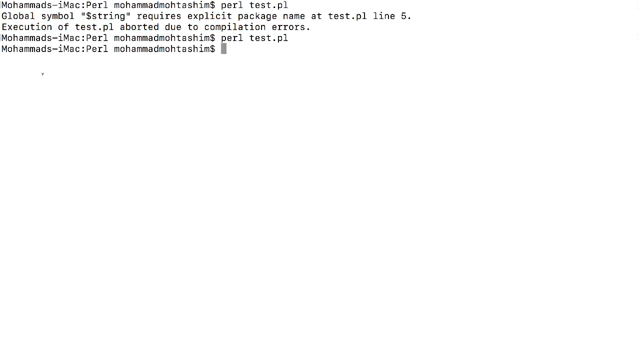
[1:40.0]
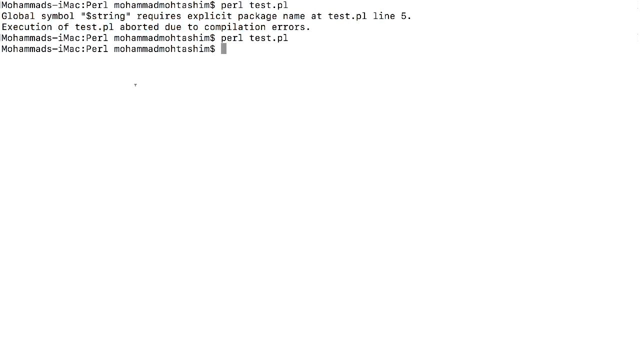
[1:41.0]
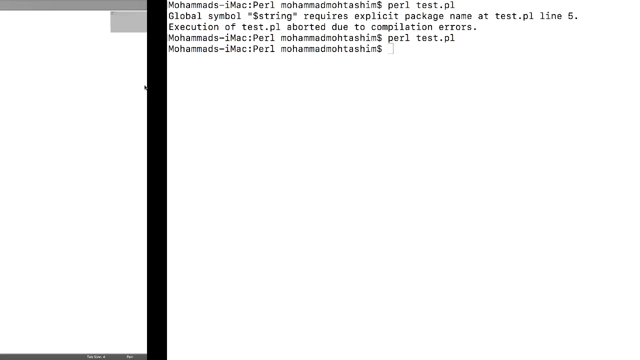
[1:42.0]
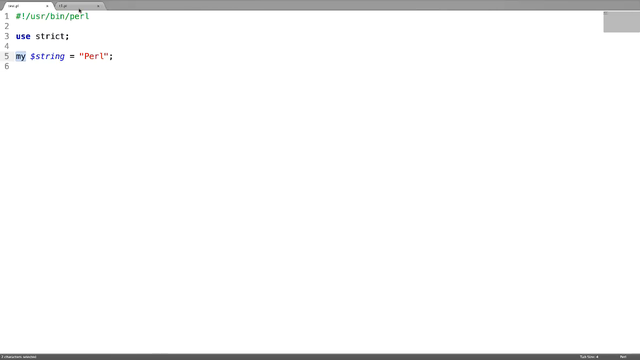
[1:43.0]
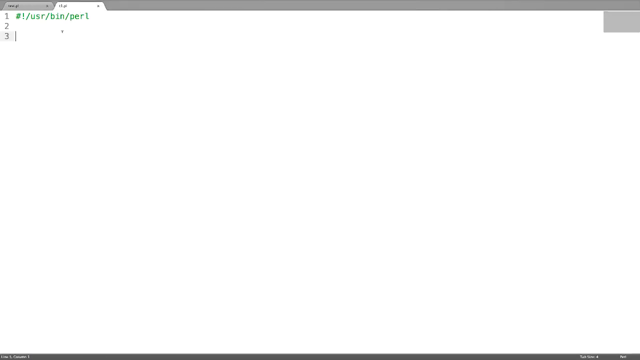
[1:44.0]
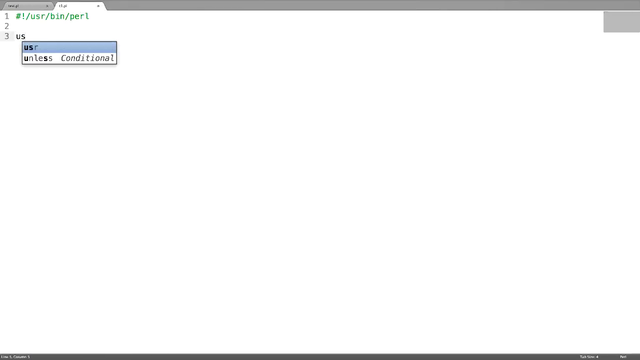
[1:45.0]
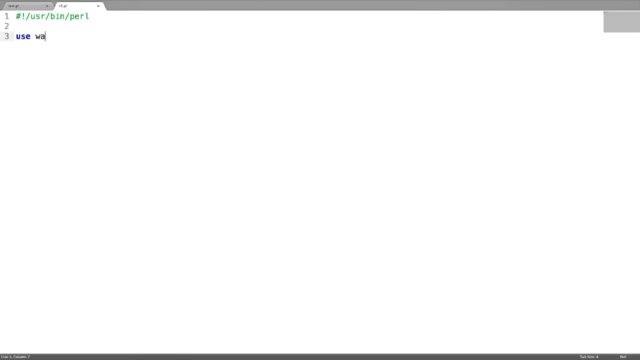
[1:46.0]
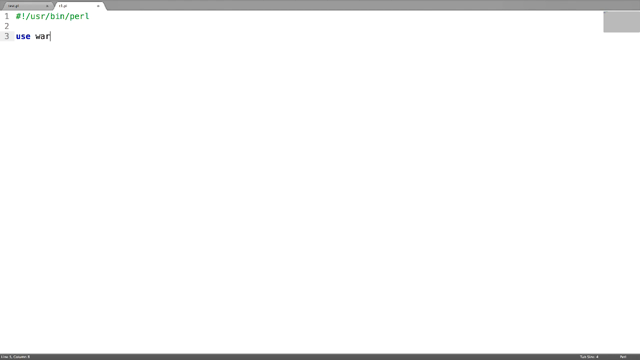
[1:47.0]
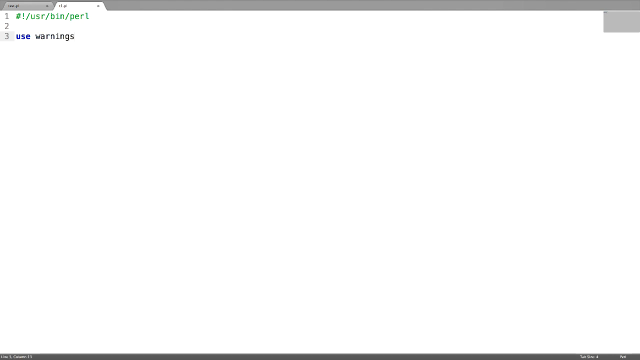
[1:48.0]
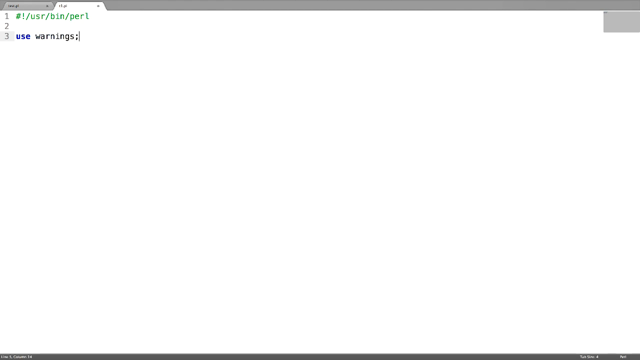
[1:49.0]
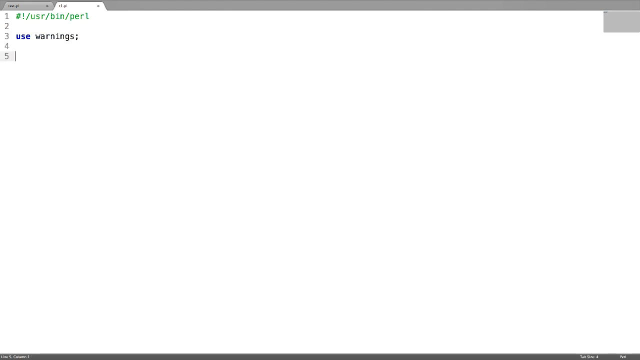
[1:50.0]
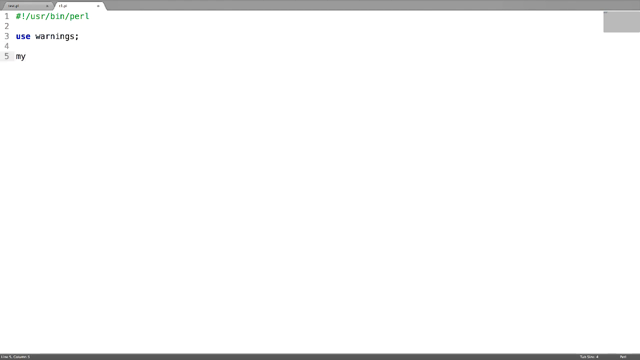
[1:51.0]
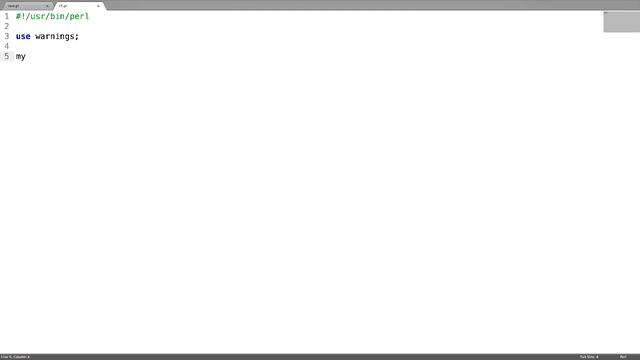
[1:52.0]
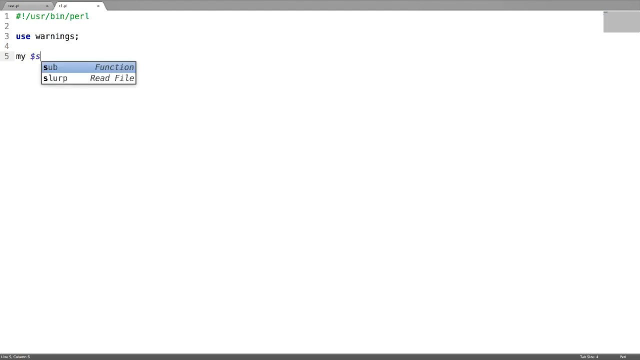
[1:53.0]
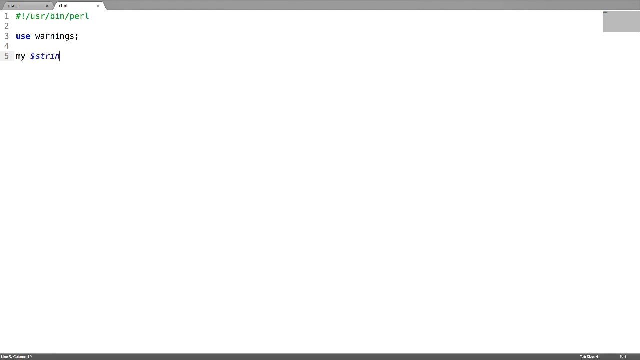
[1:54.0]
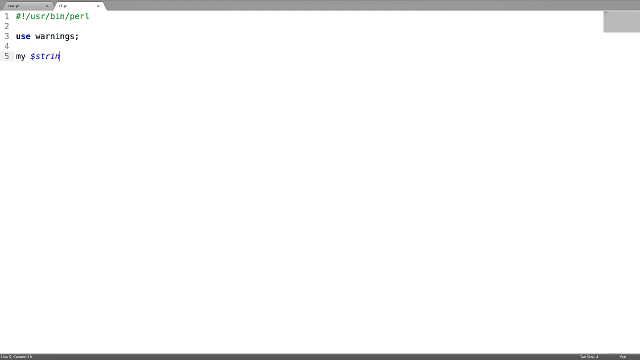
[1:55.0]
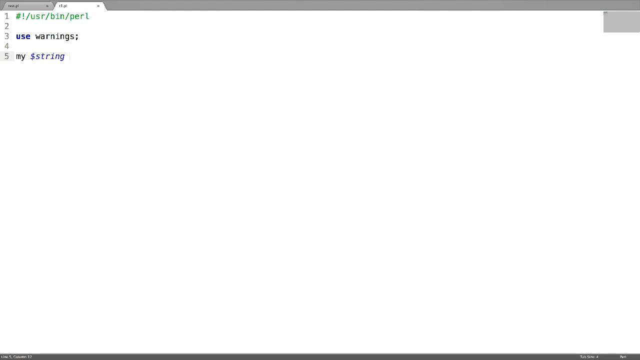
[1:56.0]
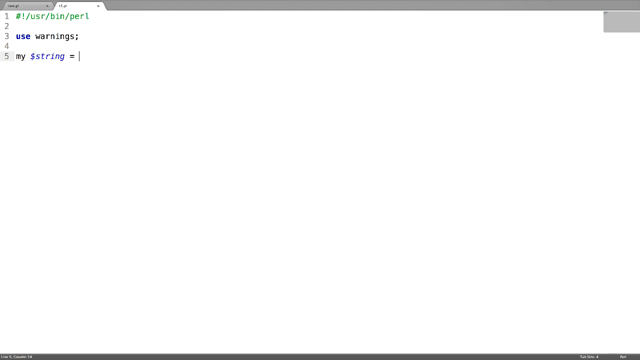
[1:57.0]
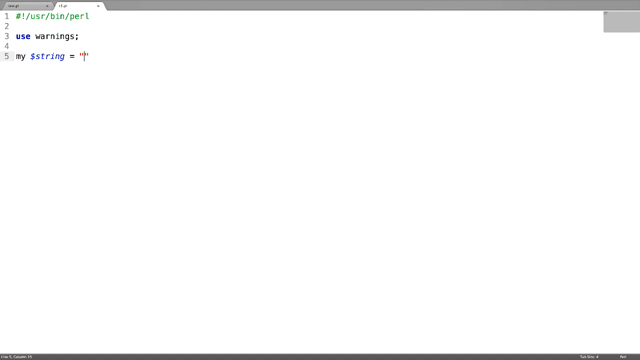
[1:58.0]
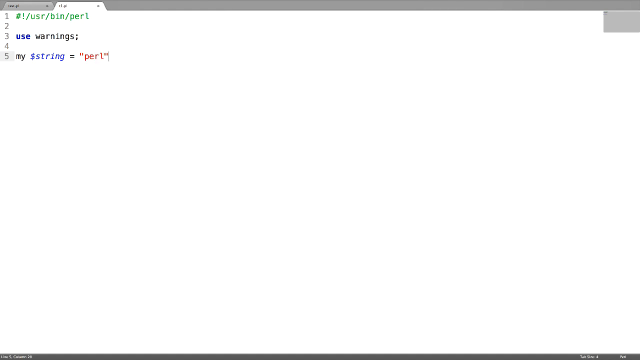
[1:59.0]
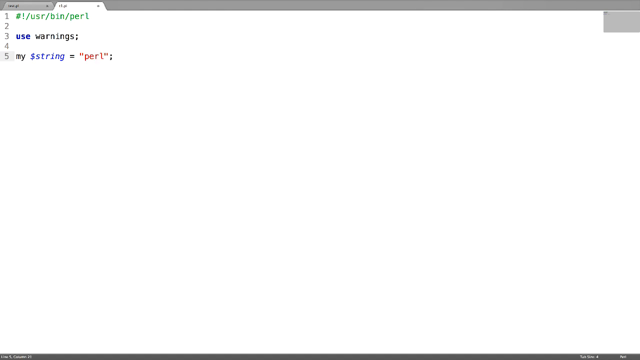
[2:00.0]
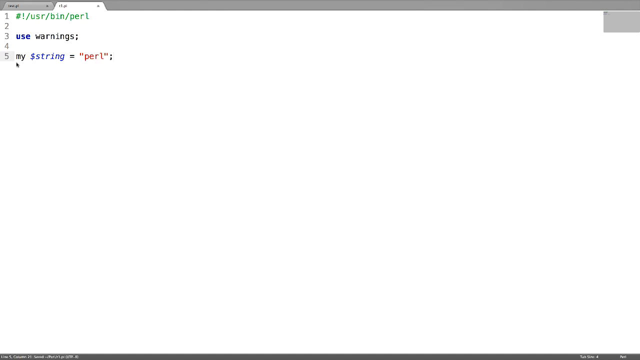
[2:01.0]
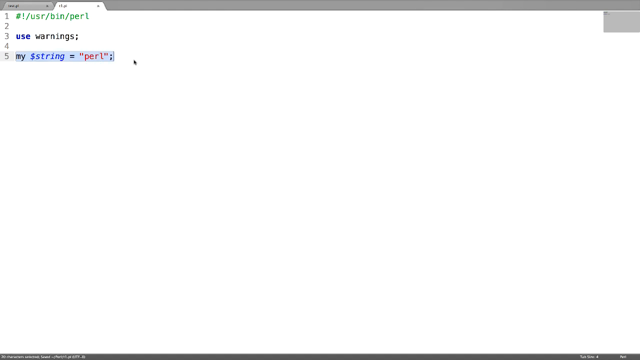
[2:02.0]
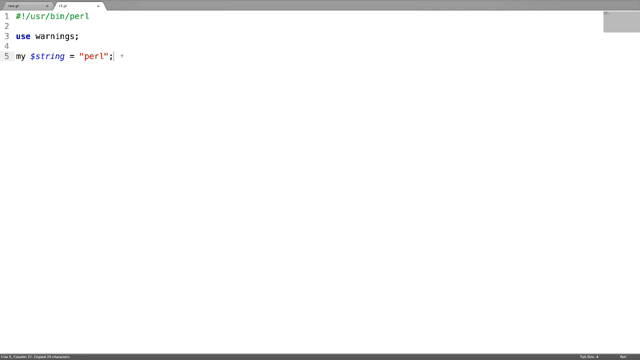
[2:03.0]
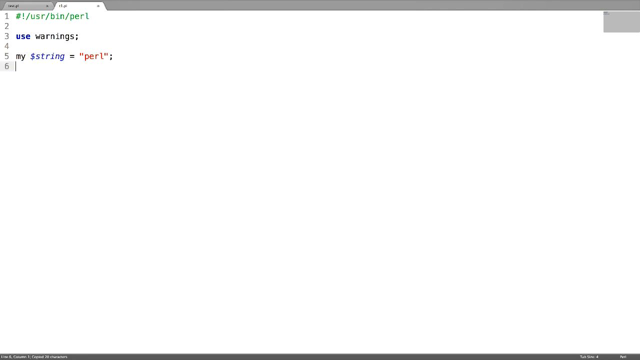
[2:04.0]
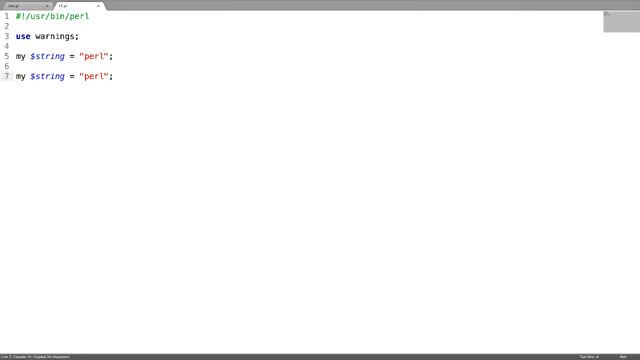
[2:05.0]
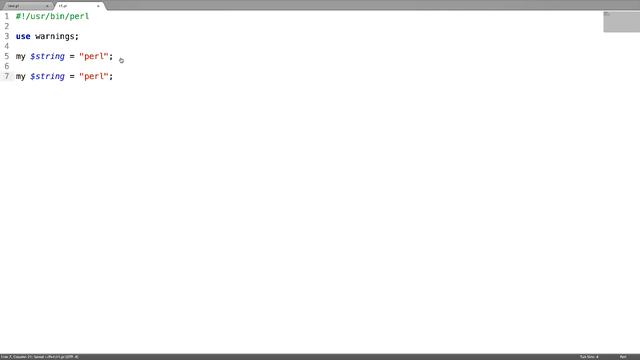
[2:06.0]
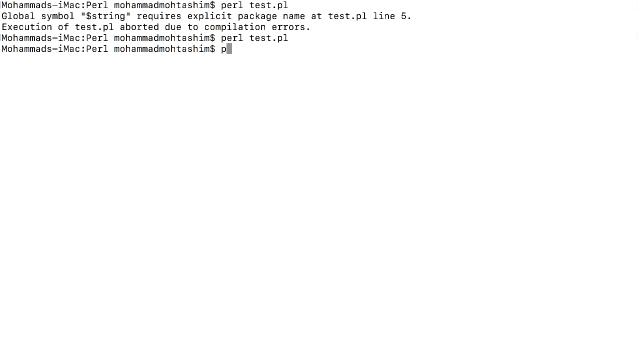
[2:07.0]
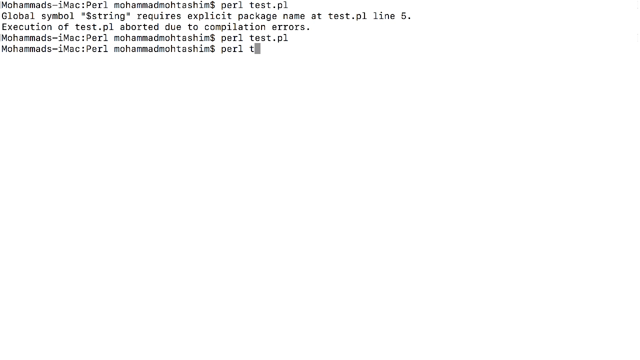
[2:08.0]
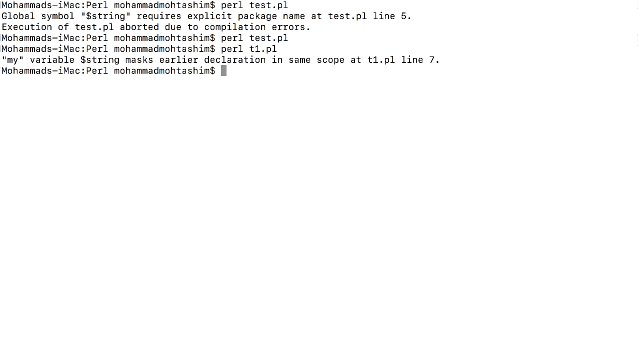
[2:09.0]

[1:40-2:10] On the white screen with the gradient effect, black lettering toward the upper left corner reads "Mohammed's-iMac:perl", followed by the letters "MOHAMMAD MOHTASHIM" and a dollar sign, a space, "PERL", another space, and "TEST.PL". On the next row, black text reads "global symbol", and beneath it "execution of text". Then "Mohamed's iMac perl" appears, followed by "Mohamed's iMac perl" a second time. The cursor moves up toward the top of the screen and clicks on the white tab. A row of numbers 1, 2 and 3 appears, and the first row shows, written in green, "#!/USR/BIN/PERL".